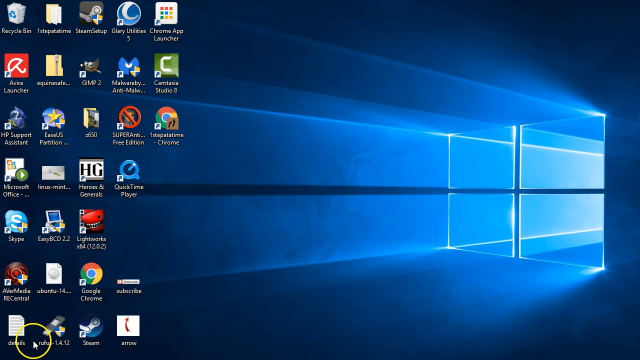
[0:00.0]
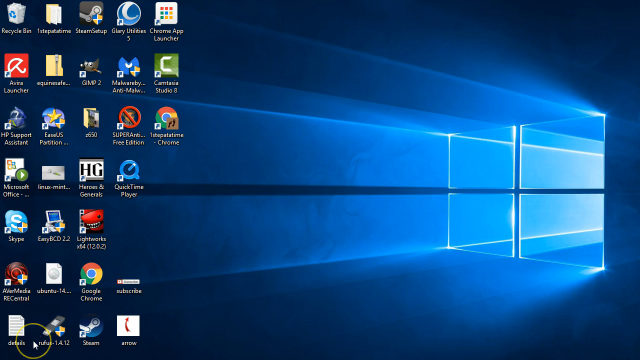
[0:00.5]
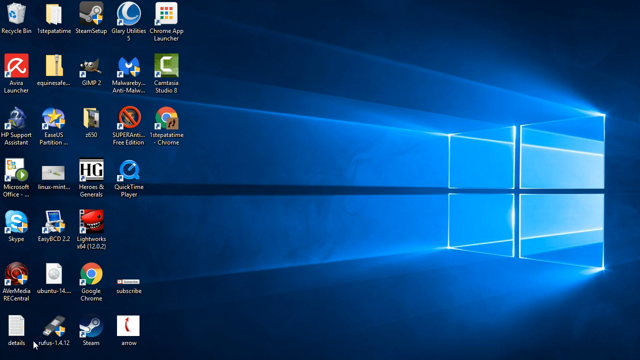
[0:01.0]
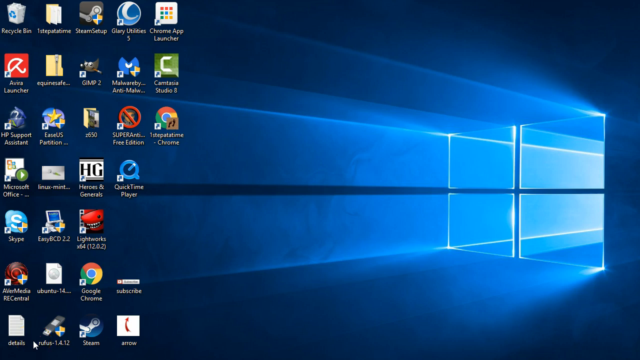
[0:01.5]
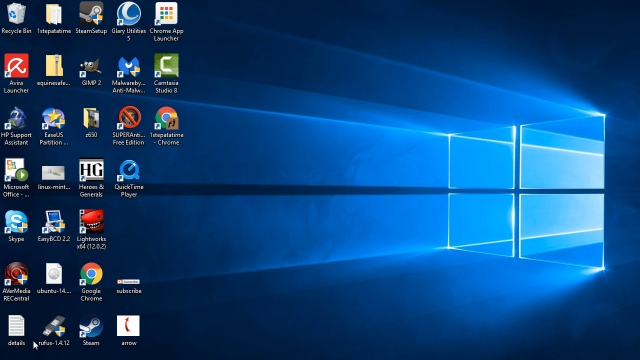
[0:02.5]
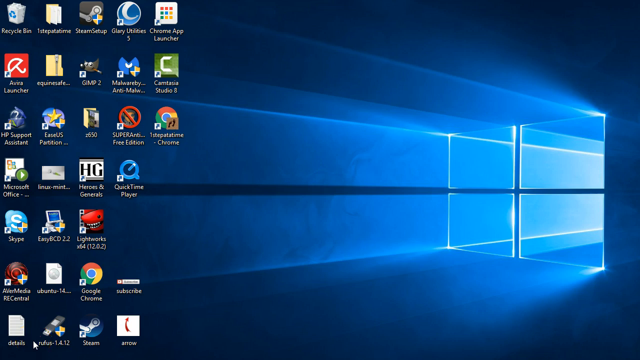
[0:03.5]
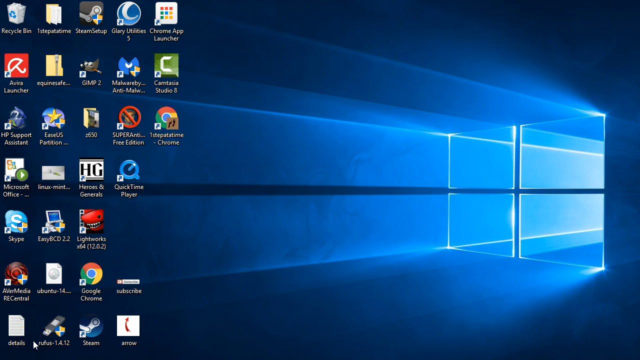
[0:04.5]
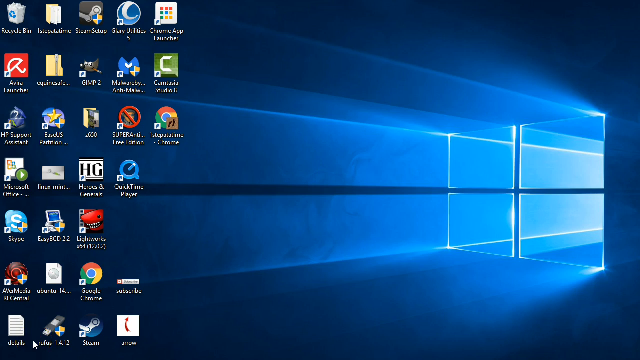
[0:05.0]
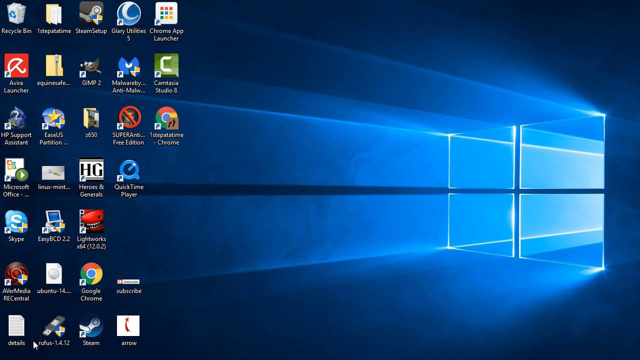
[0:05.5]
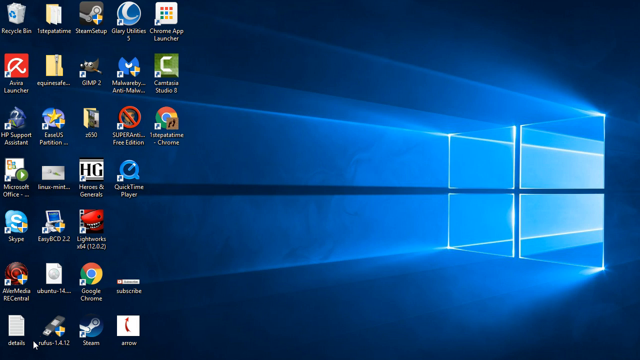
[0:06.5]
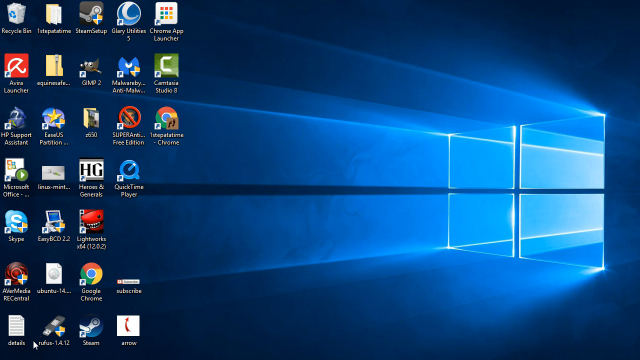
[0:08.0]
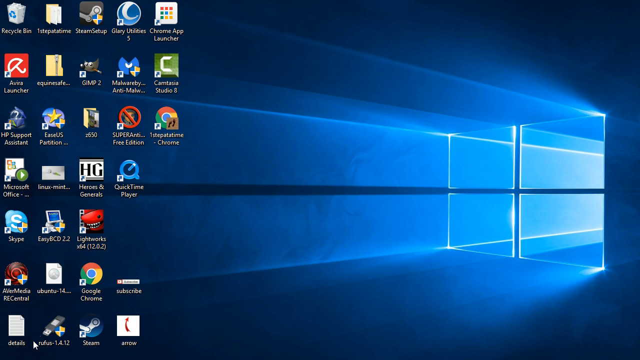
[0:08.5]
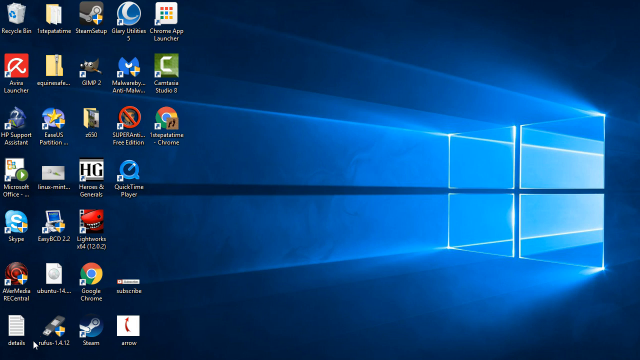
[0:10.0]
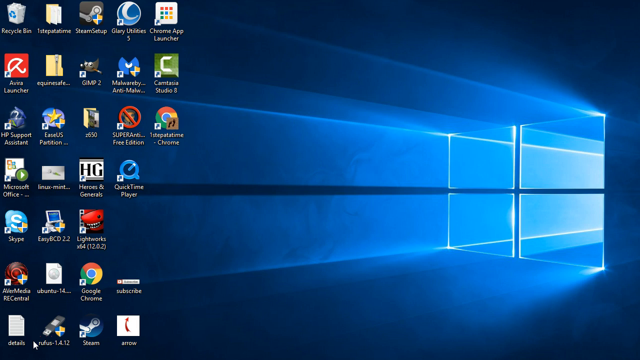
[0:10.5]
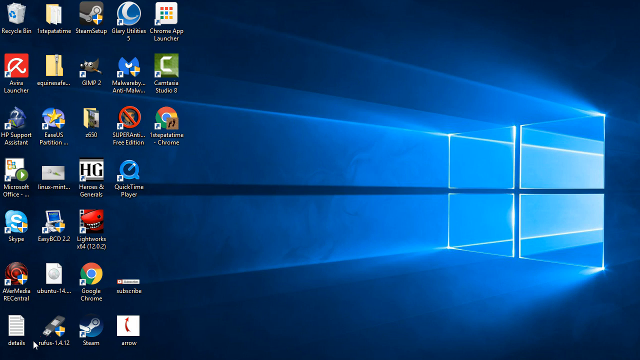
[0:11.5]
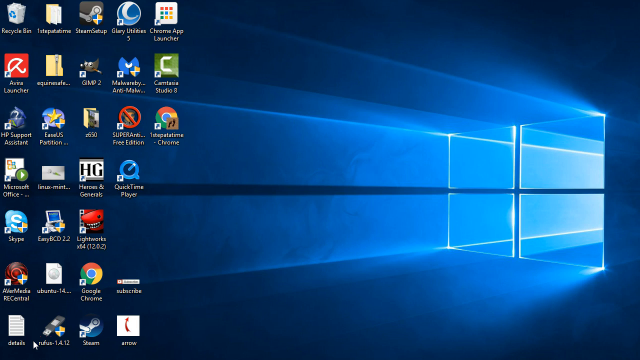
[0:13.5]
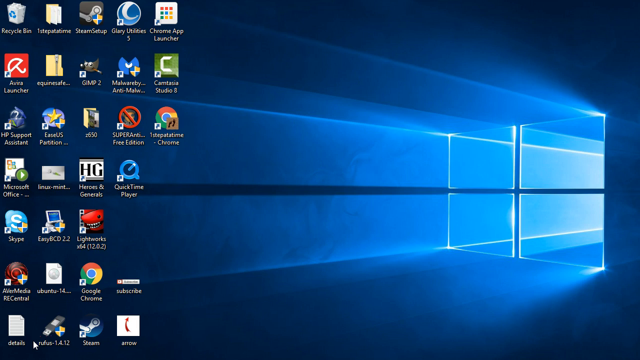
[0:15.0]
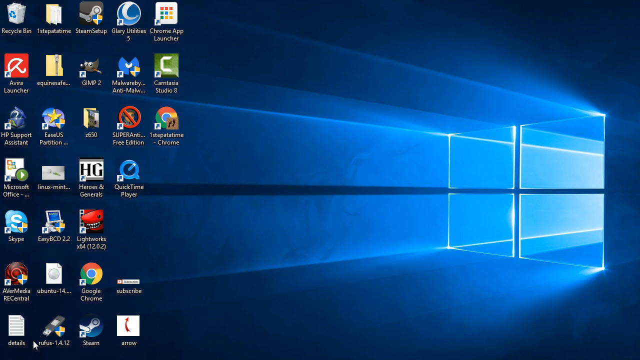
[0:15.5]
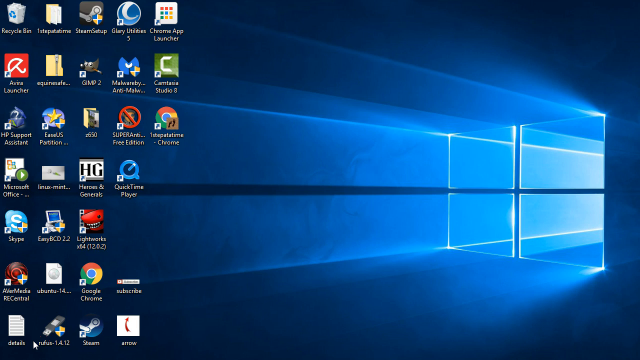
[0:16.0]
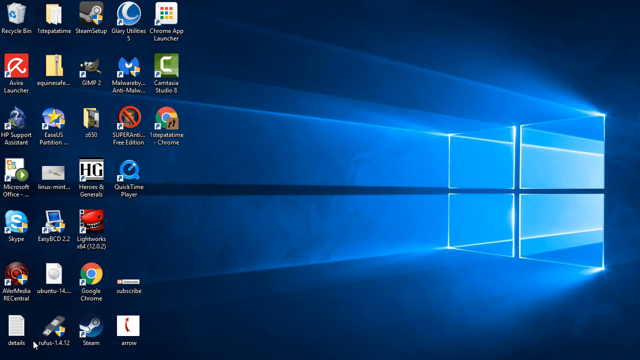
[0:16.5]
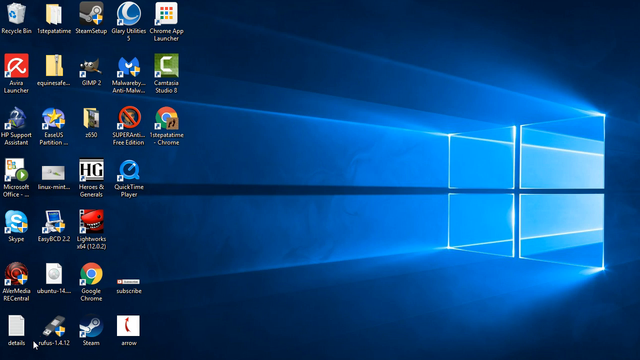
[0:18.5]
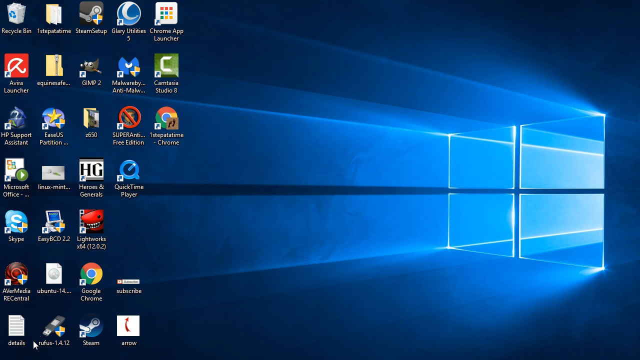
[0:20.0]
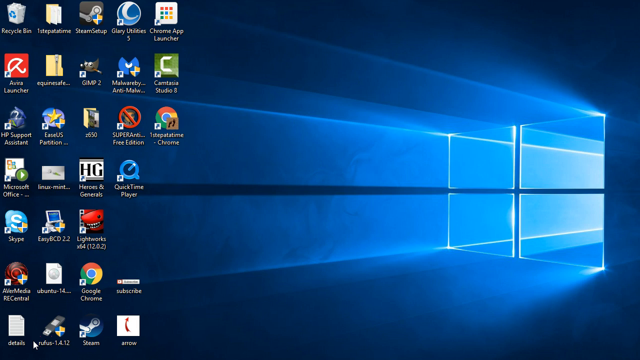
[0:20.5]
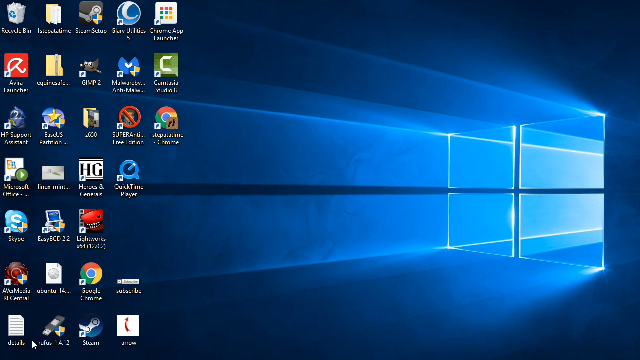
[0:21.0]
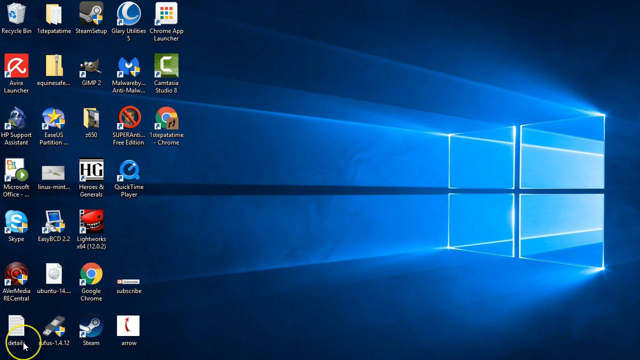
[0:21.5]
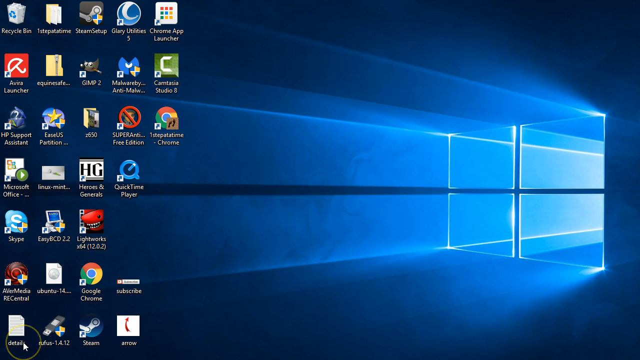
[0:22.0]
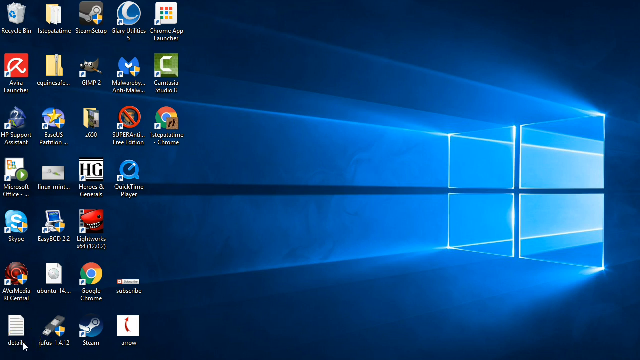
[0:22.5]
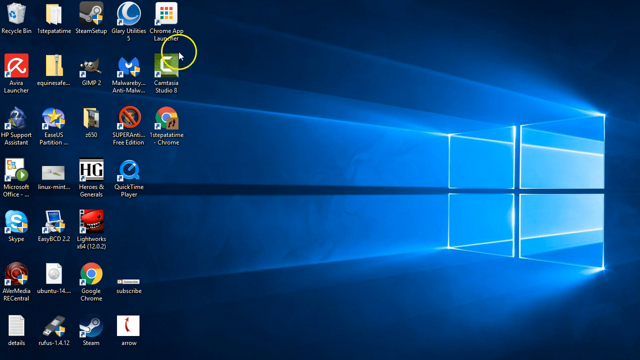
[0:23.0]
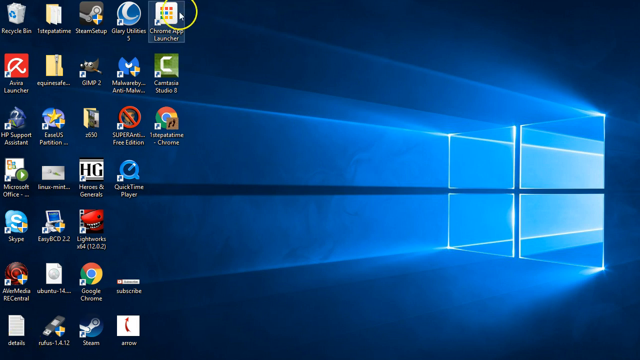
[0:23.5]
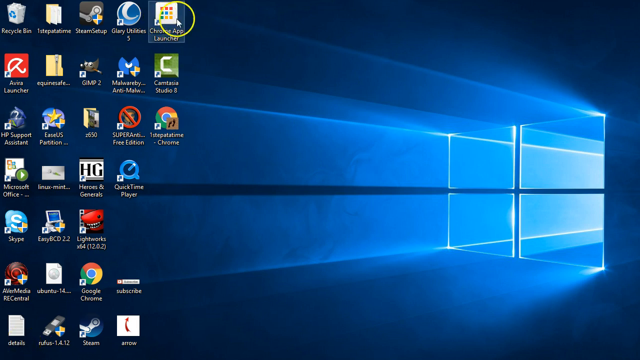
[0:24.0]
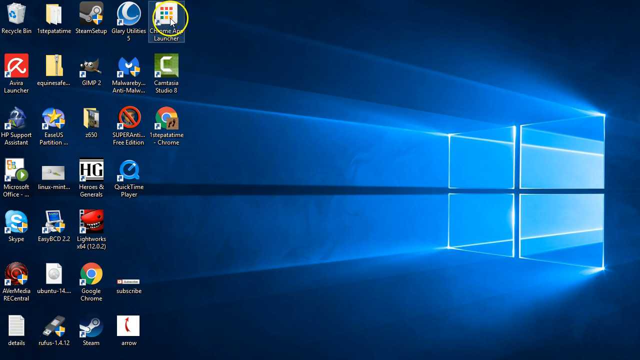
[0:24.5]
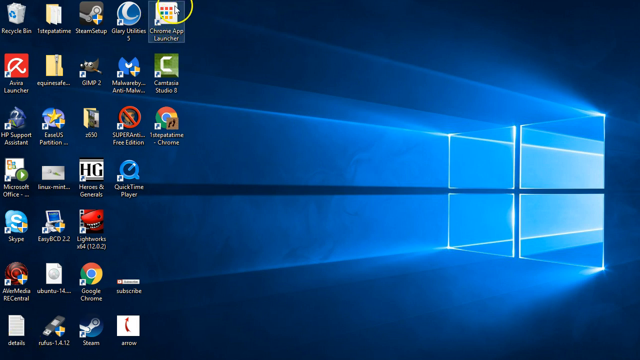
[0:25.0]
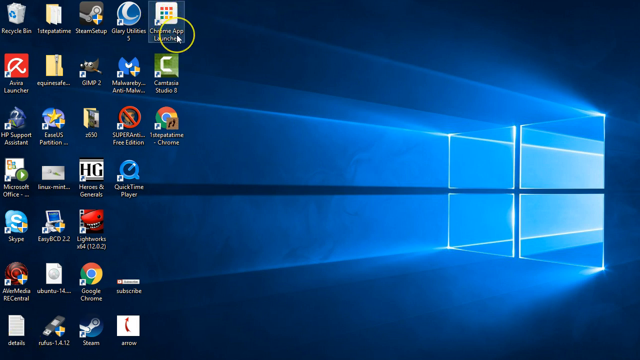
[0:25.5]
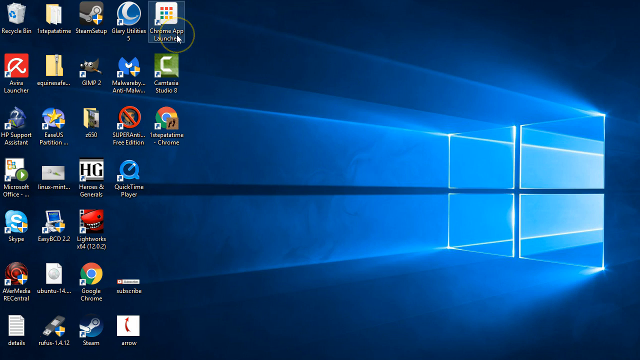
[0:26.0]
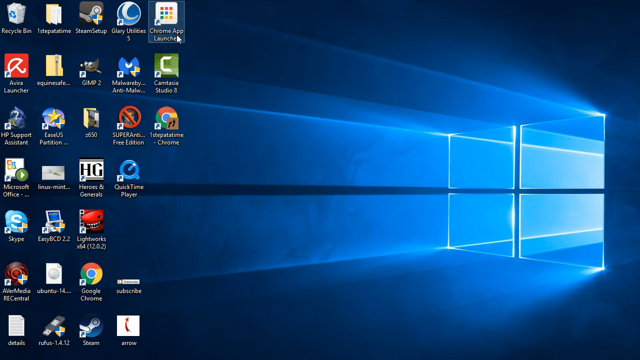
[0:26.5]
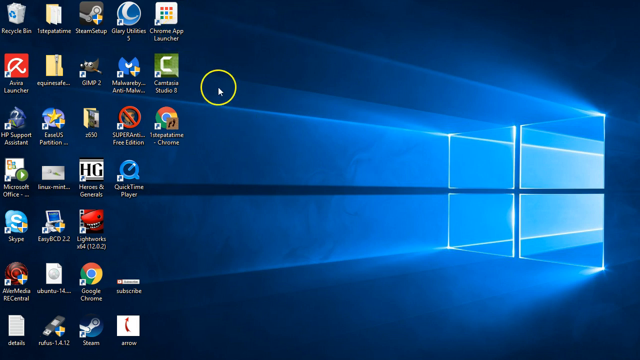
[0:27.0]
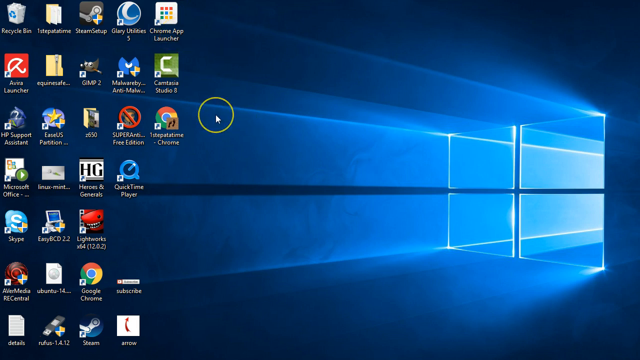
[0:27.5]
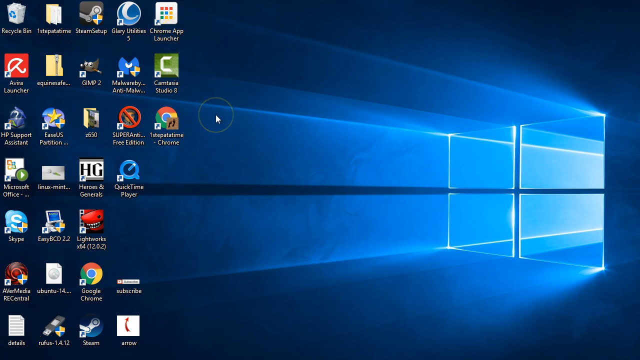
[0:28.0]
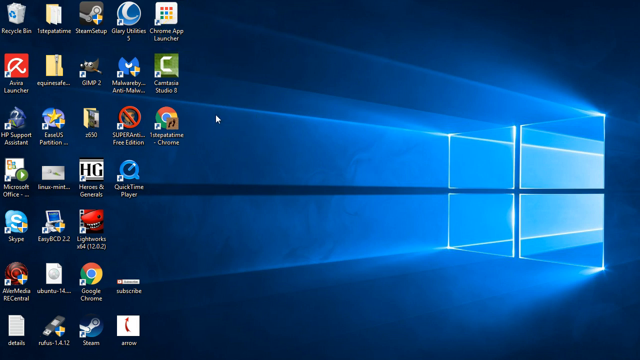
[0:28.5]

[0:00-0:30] A Windows desktop with a blue background appears. On the right-hand side is a four-pane window, with the illusion of light shining in through it and creating parallel bars of brighter color across the screen toward the left-hand side. The image stays still for the first 25 seconds. On the left-hand side are five columns of icons: the first three columns have seven icons each and fill the vertical space, the fourth column has an empty space five rows down, and the last column contains three icons at the top. In the lower right corner is a cursor in the form of a white arrow; when it moves, a large circle about the size of one of the icons appears around it. After no changes for 24 seconds, the cursor moves up from the lower left-hand corner to the first icon in the fifth row and highlights it very briefly. The icon is a white square containing nine colored squares in a 3x3 grid. The cursor bounces over this icon, moving up and down and side to side for a second, then moves down and right onto the empty screen beside the last column of icons.